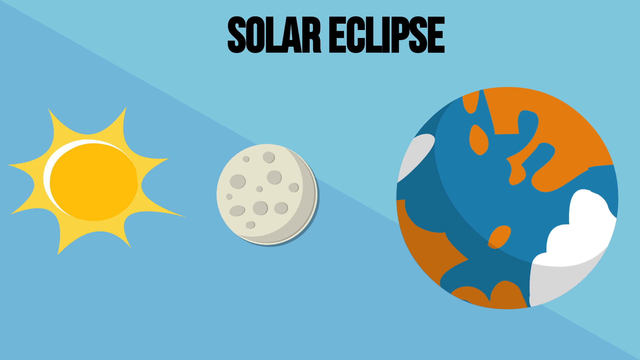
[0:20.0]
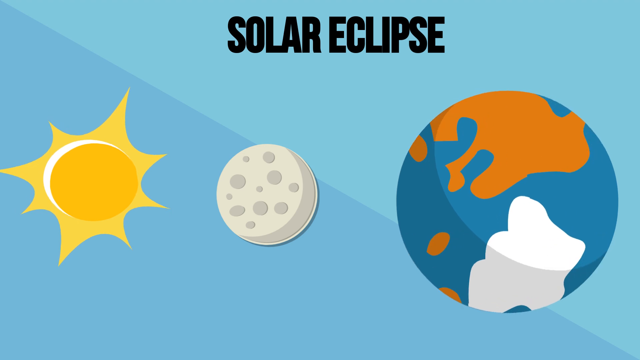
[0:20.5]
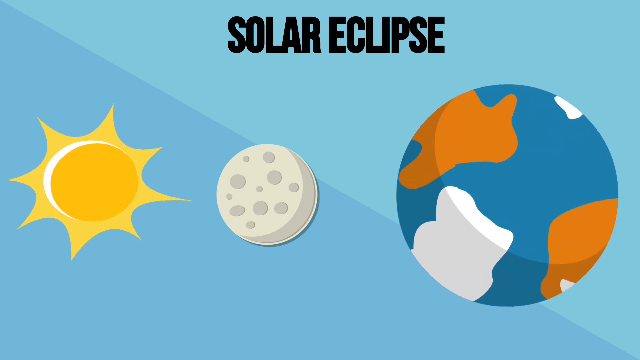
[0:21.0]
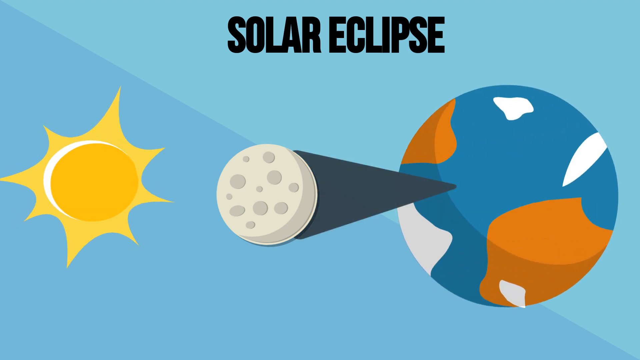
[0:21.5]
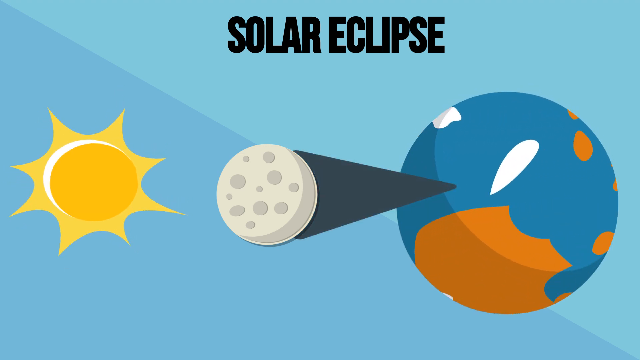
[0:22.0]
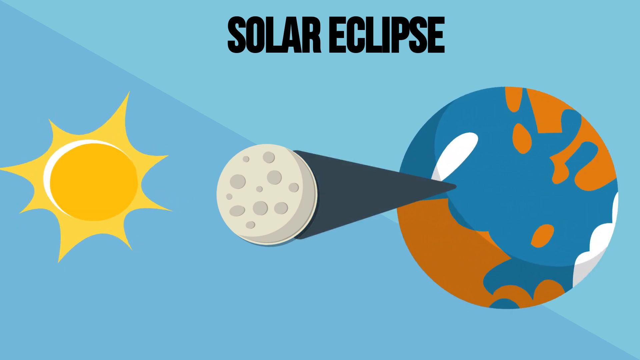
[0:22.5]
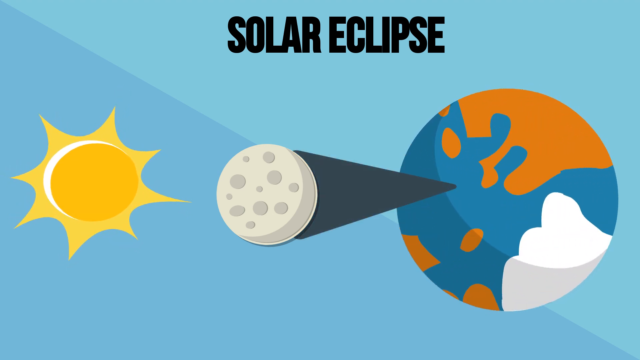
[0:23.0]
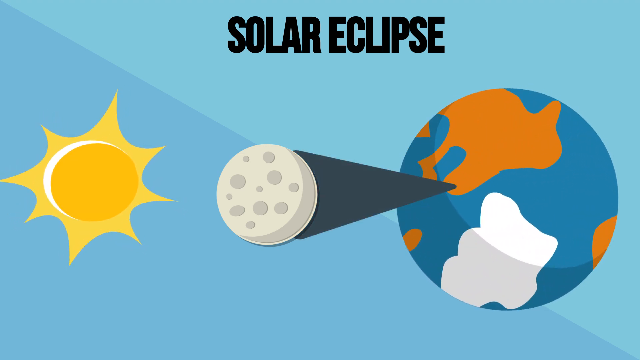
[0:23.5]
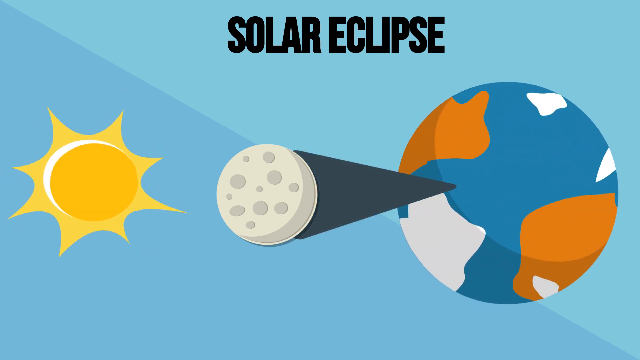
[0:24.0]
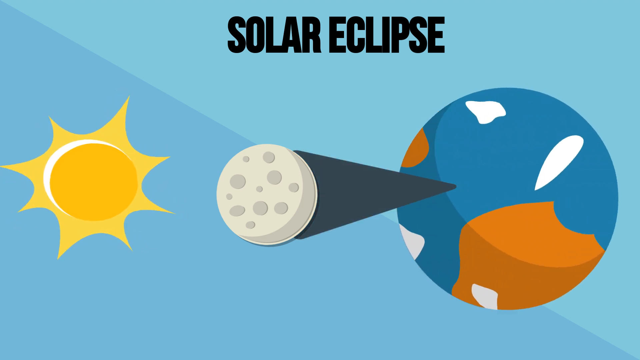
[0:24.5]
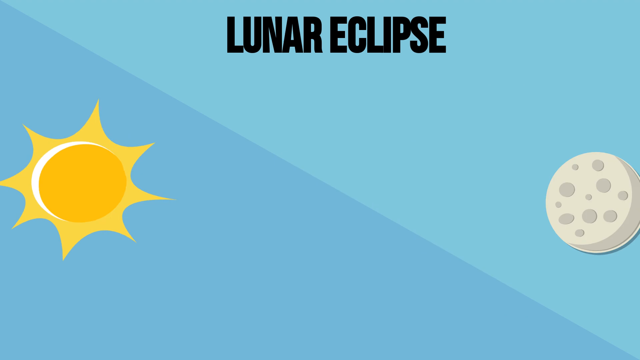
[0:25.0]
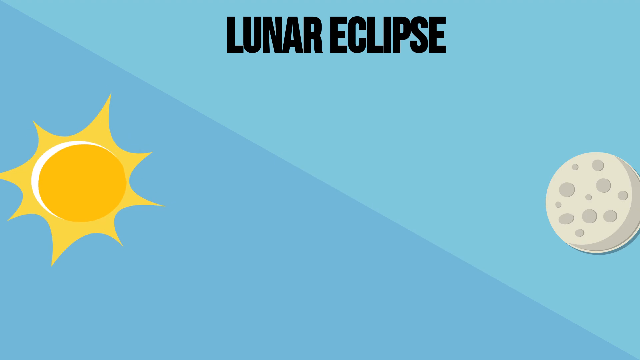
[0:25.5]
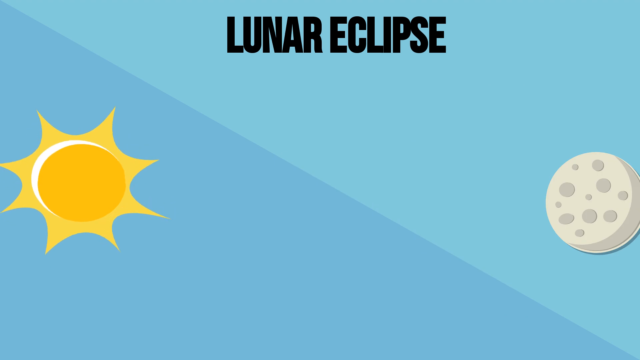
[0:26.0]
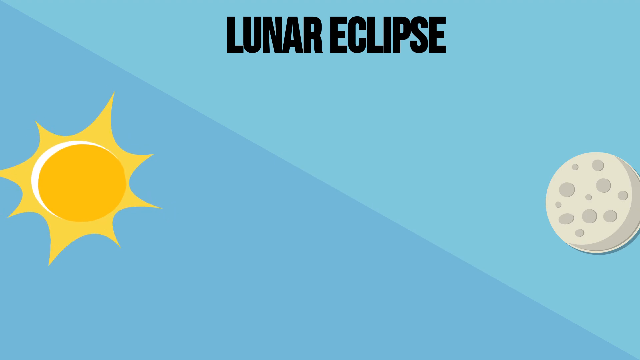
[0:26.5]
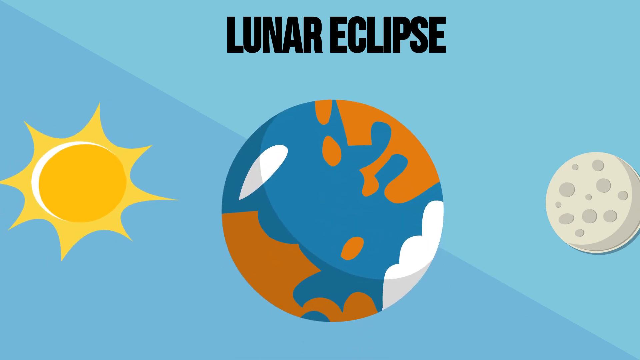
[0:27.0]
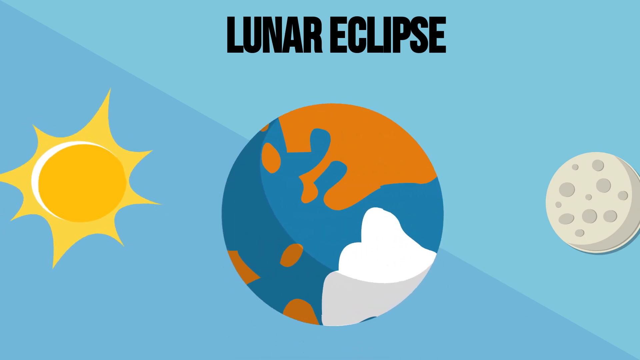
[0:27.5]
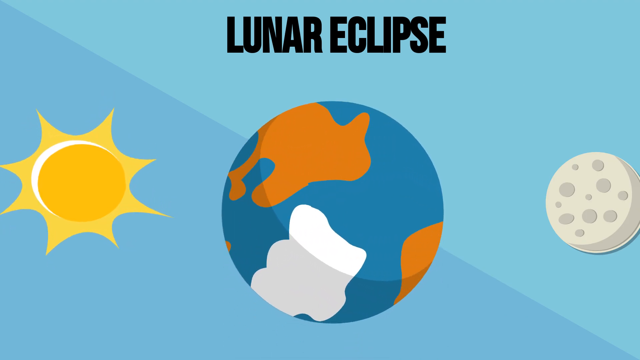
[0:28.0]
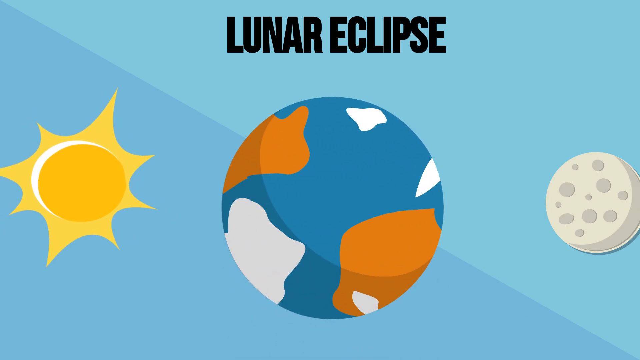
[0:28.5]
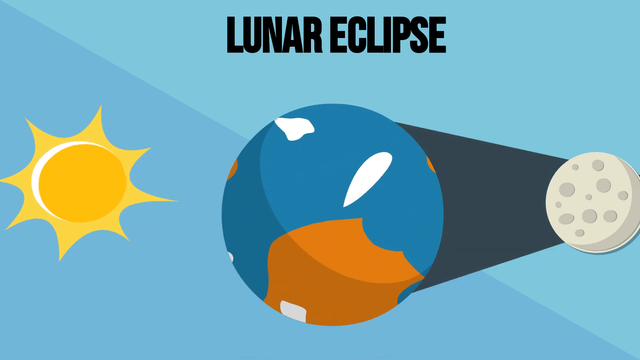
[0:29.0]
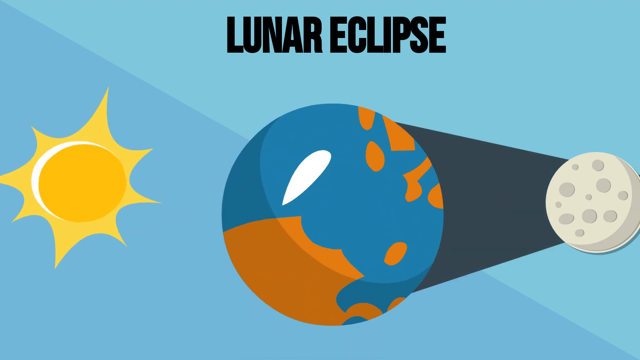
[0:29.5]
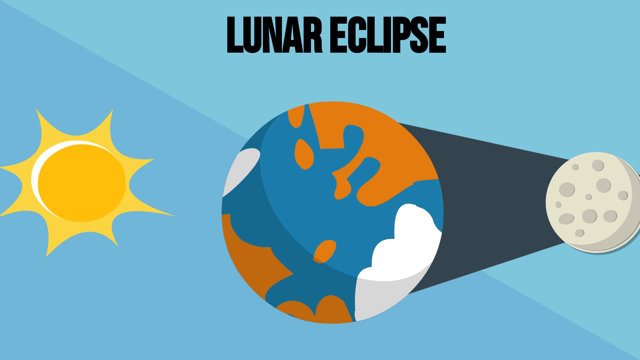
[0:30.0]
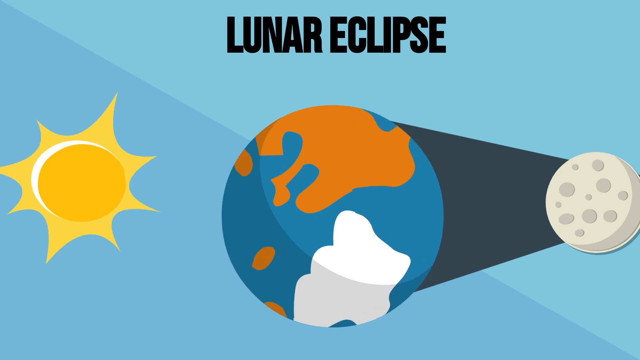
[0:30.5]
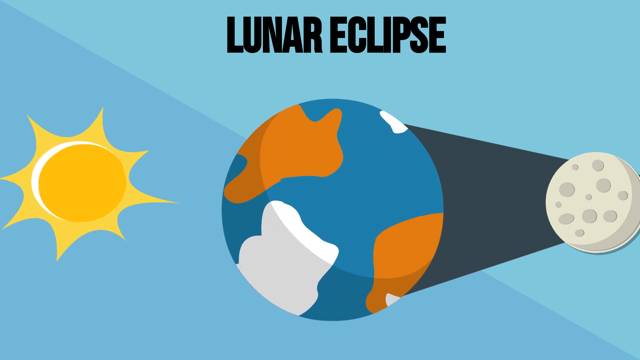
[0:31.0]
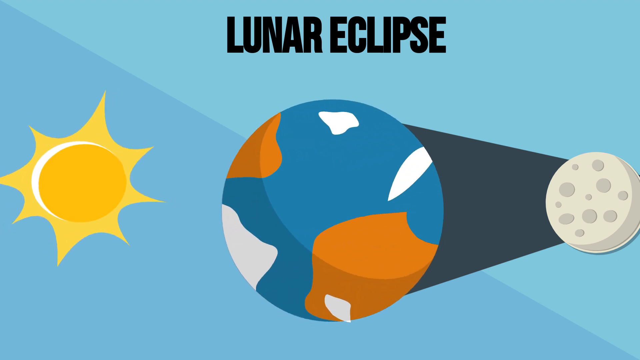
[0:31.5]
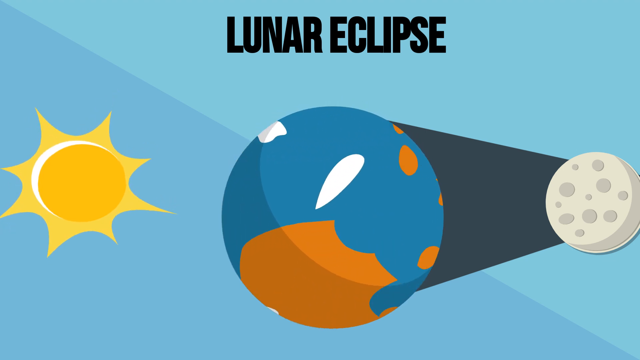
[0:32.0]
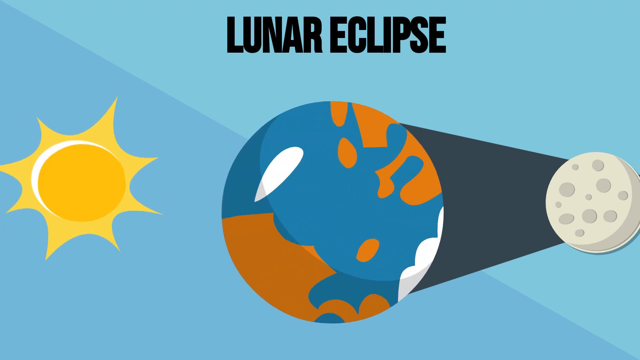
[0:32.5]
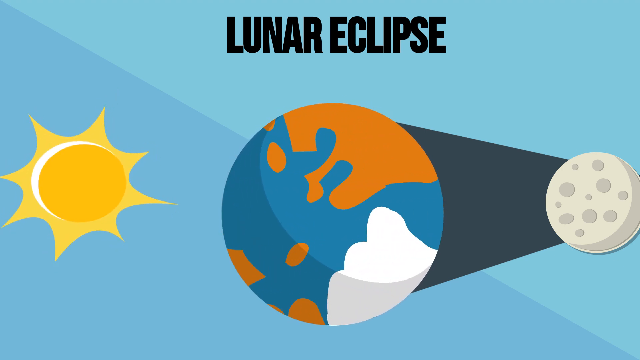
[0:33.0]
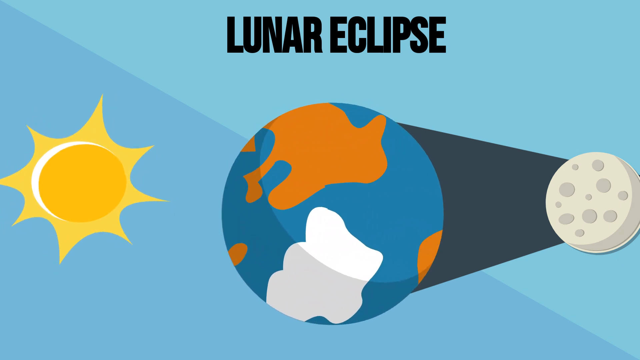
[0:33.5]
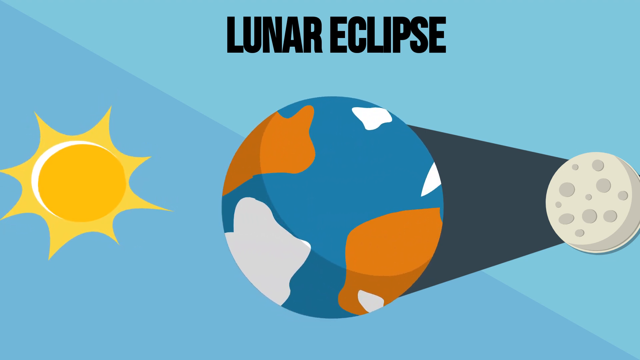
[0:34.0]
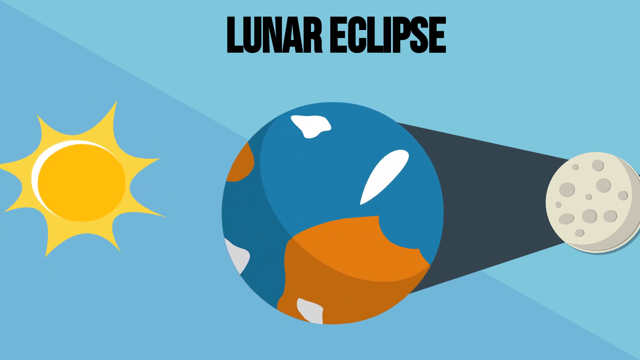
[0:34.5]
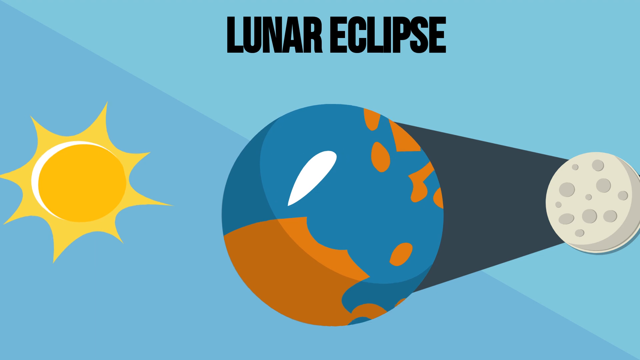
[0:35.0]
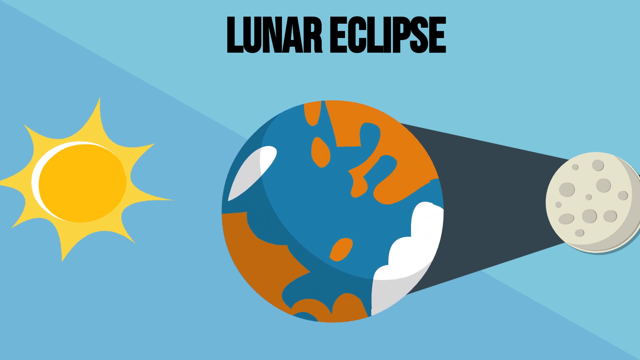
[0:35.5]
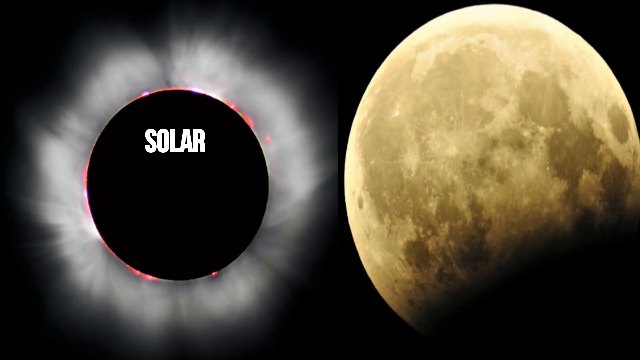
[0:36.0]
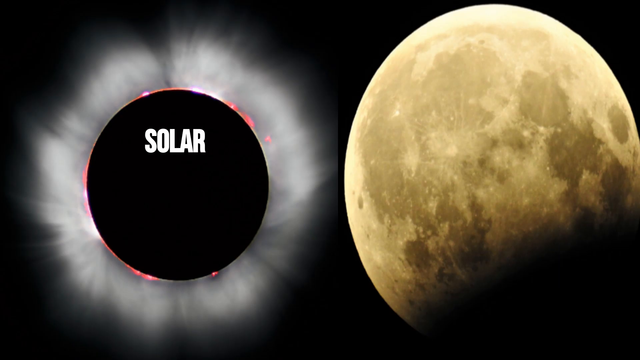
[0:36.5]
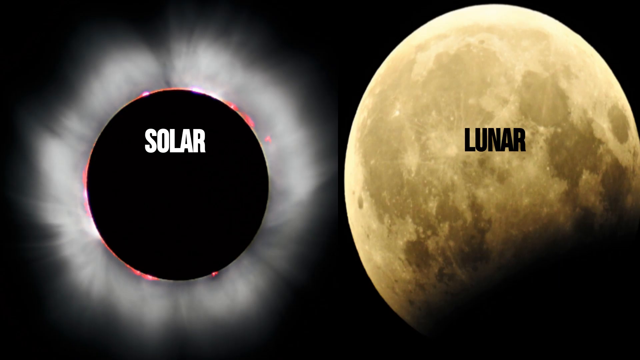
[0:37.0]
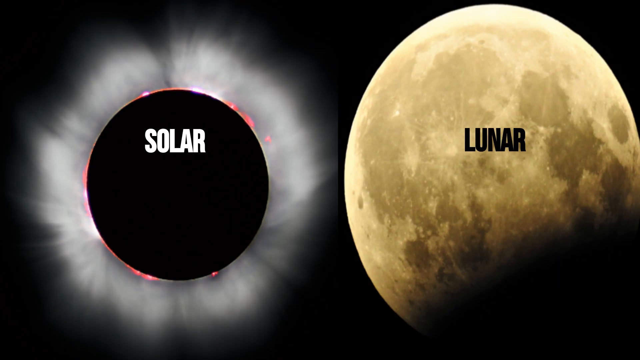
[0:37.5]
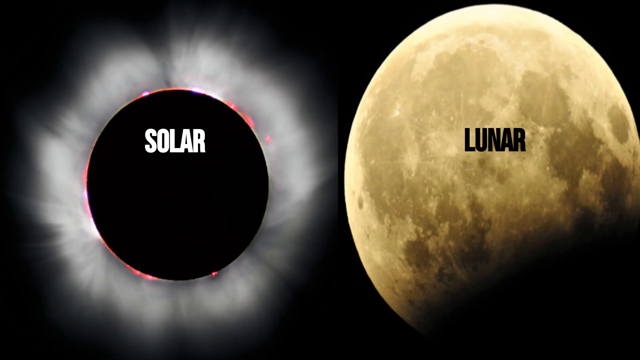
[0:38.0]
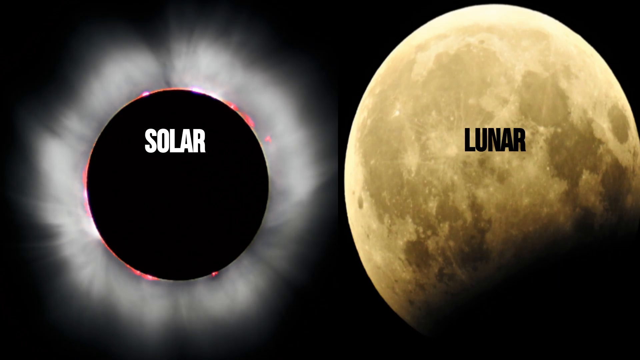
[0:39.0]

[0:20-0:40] A cartoon rendition of a solar eclipse shows a bright sun on the far left, the moon in the middle between the sun and the Earth, and the Earth spinning. Where the shadow falls on the spinning Earth, the animation shows a total eclipse. A lunar eclipse follows: a cartoon sun is on the left, the Earth is in the middle, and the moon is on the other side, and the animation shows a shadow where the sun hits.